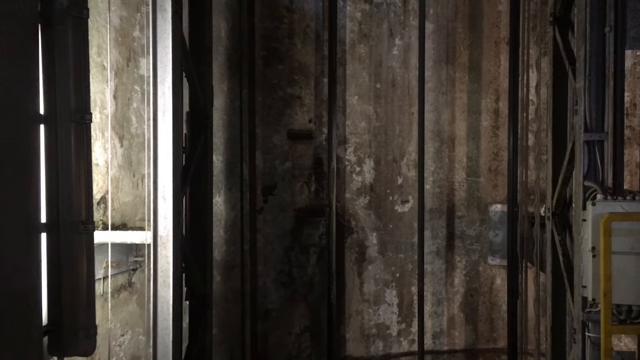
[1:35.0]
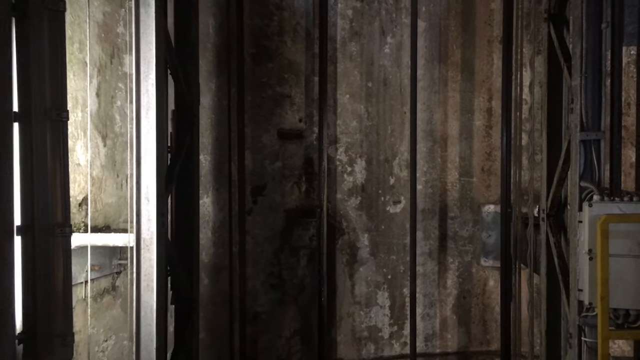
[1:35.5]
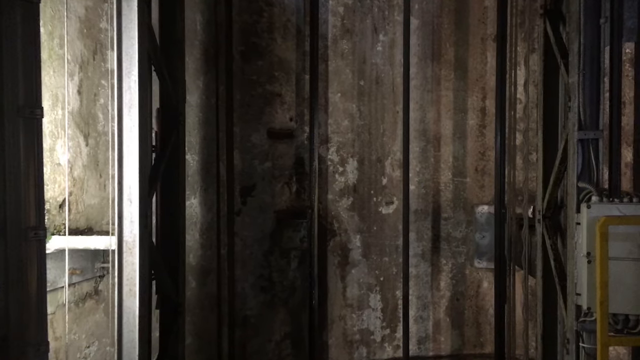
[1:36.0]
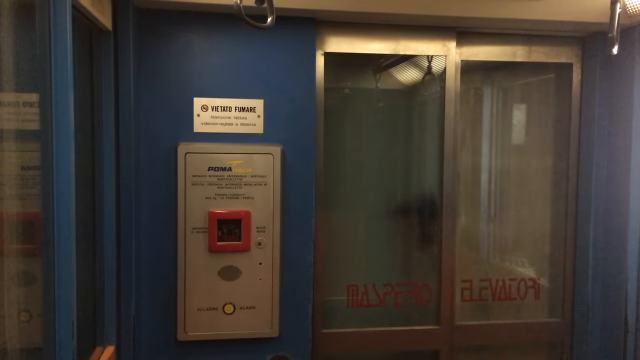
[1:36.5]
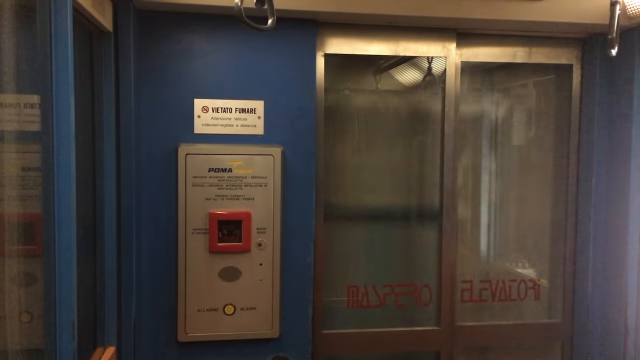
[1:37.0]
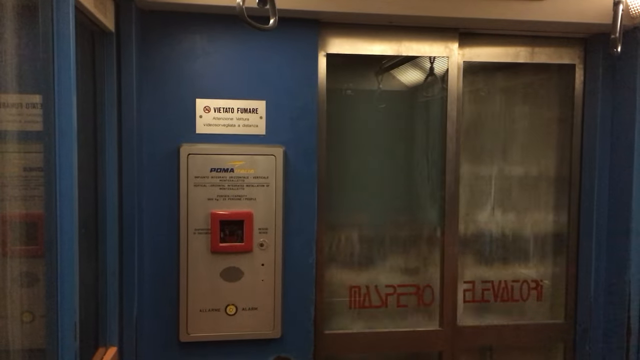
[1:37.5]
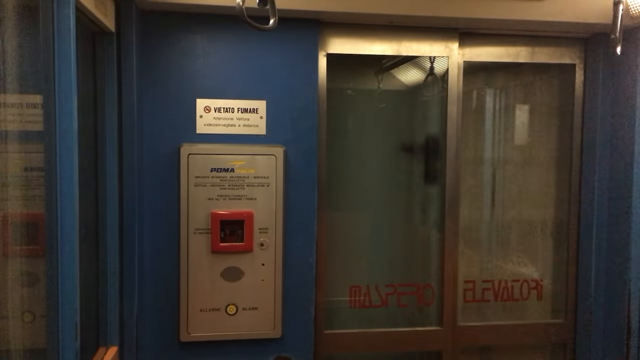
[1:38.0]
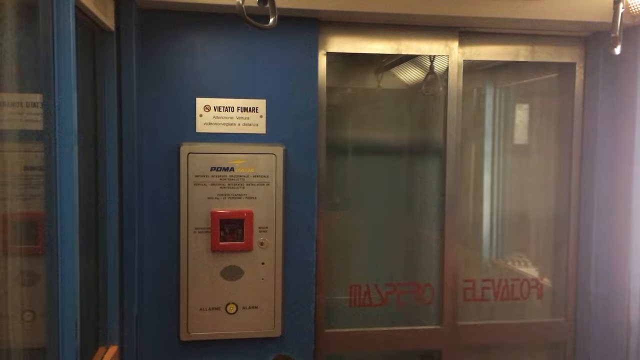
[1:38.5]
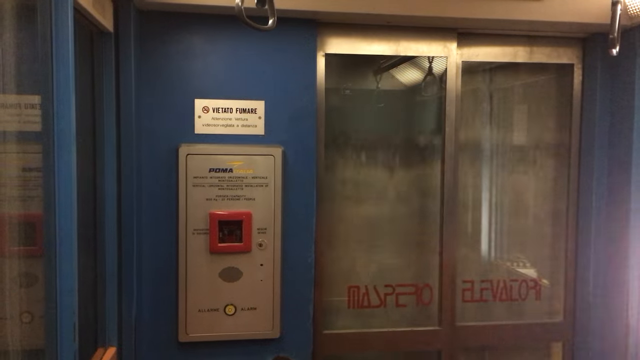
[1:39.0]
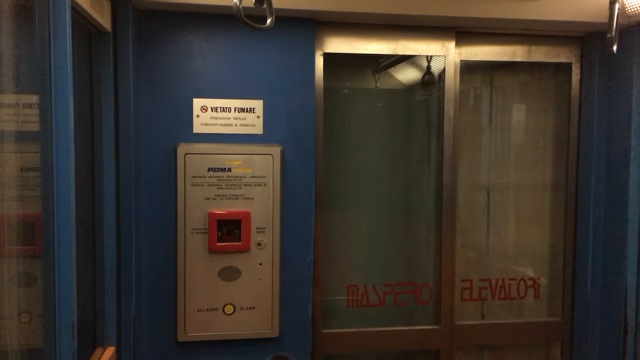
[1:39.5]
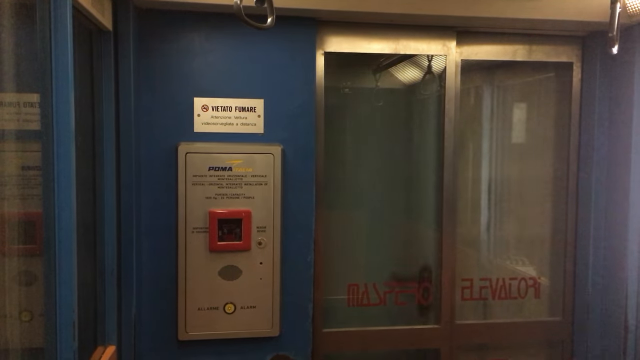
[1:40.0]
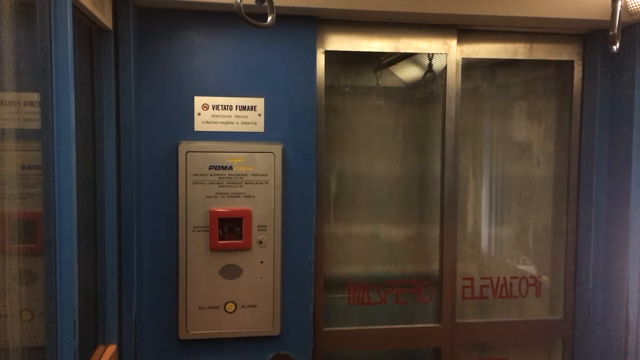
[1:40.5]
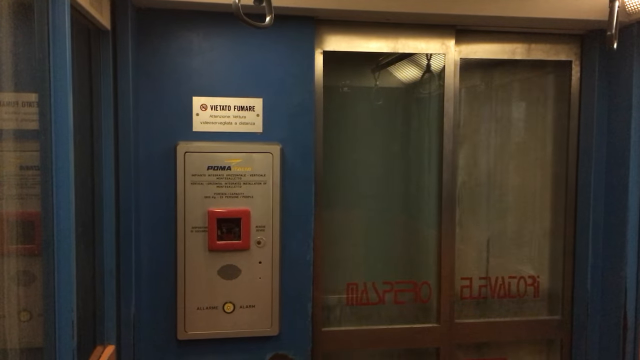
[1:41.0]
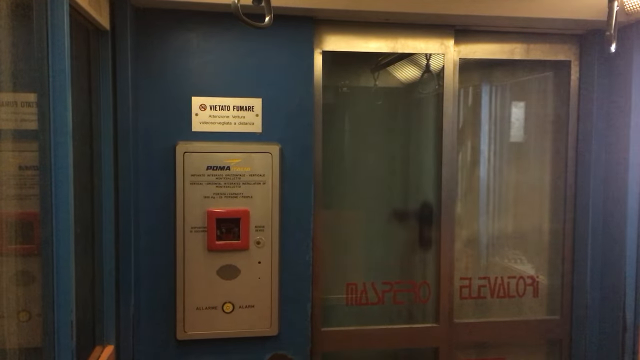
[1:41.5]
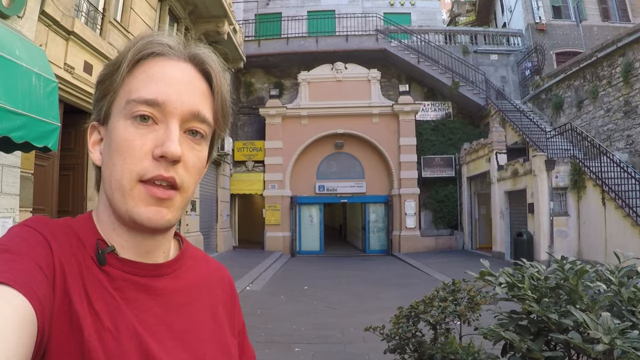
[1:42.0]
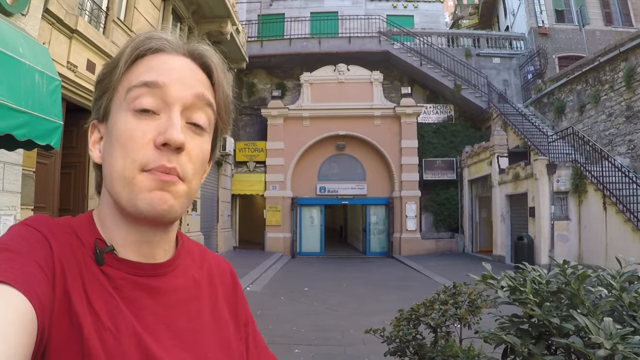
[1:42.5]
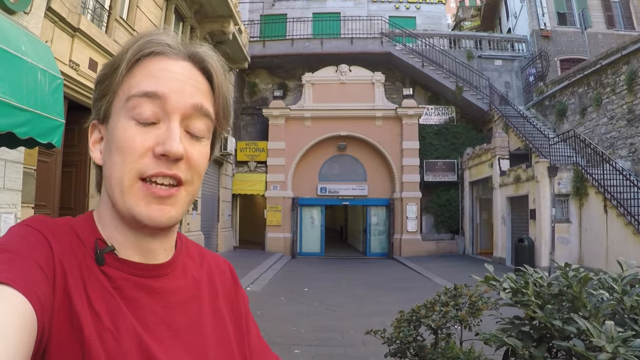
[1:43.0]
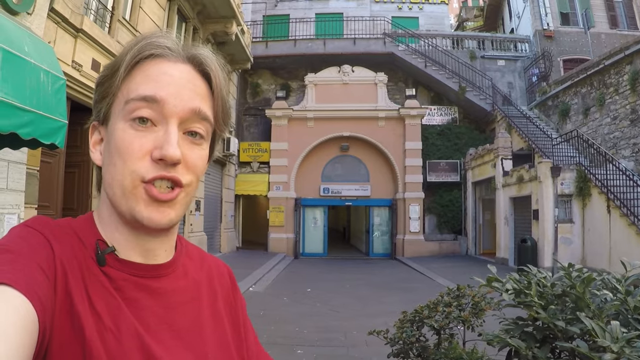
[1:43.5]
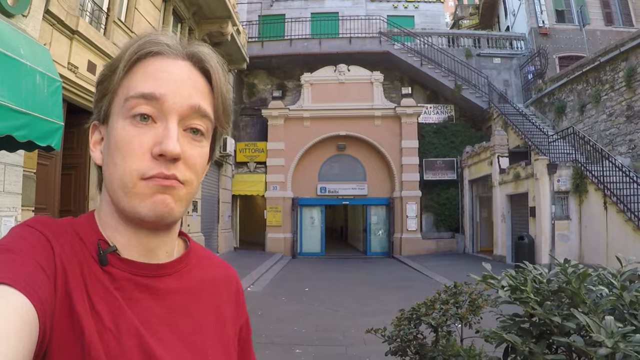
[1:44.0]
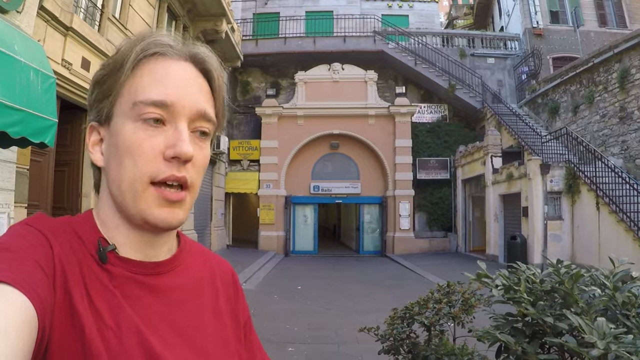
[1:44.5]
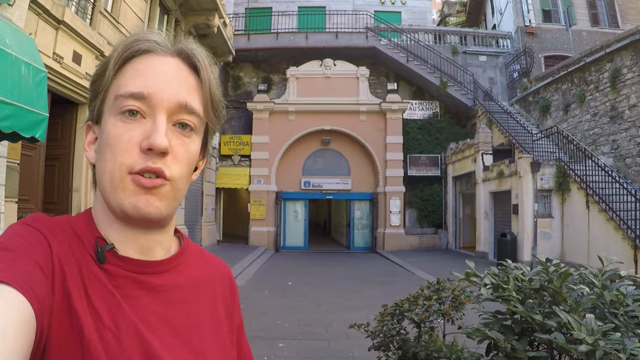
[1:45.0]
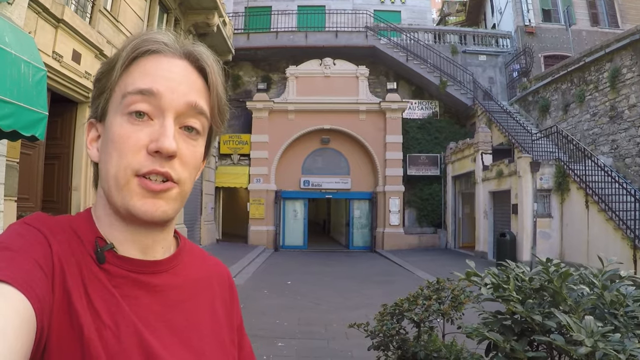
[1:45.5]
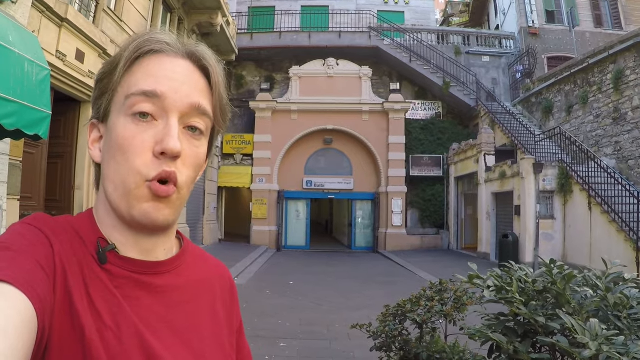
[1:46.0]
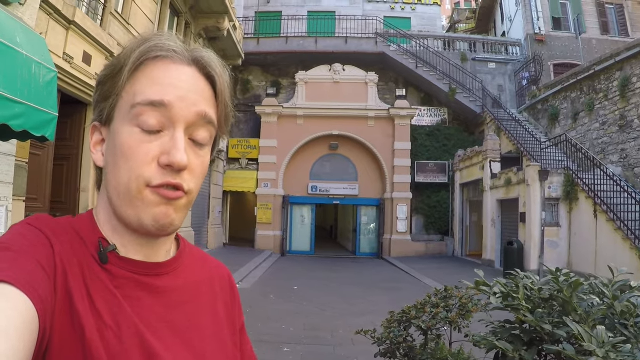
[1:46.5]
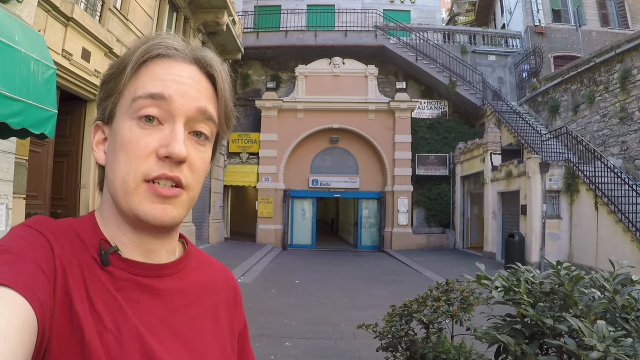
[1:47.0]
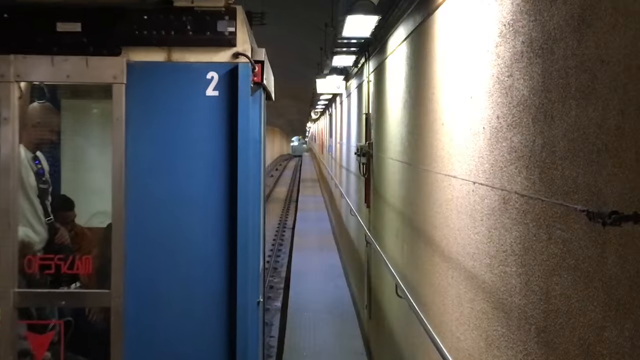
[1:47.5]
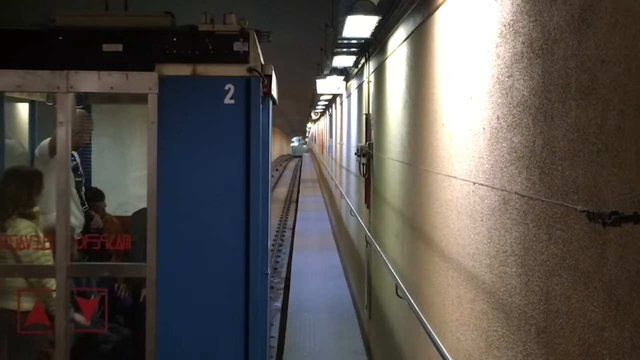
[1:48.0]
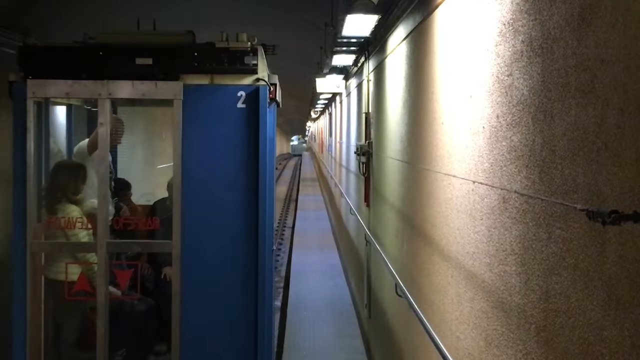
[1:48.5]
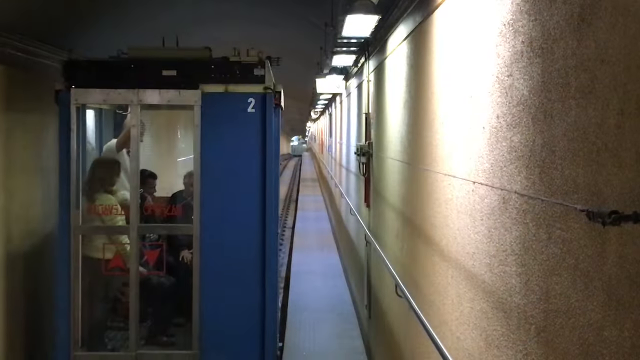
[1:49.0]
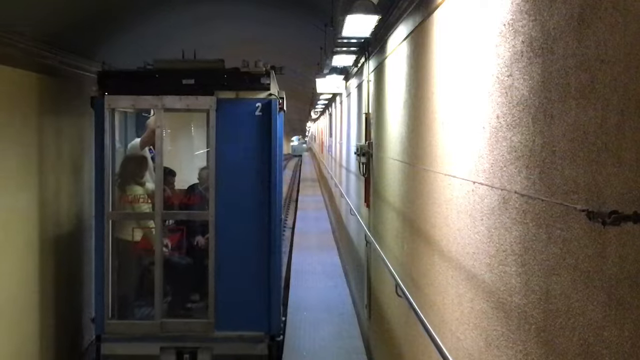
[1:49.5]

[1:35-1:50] In the shaft, where the only way is up, the camera switches to a perspective shot of a blue elevator going upwards, with the wall passing by, red text on the window, and a control panel box with a red square on it. The man in the red shirt talks to the camera selfie style. Then the blue elevator box appears; it apparently pulls out from the wall to another level and pushes forward onto a track. At least four people are on it as it moves along the wall, perhaps toward another station or section of the elevator.